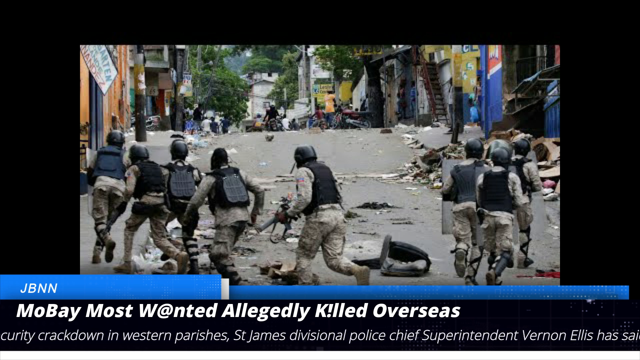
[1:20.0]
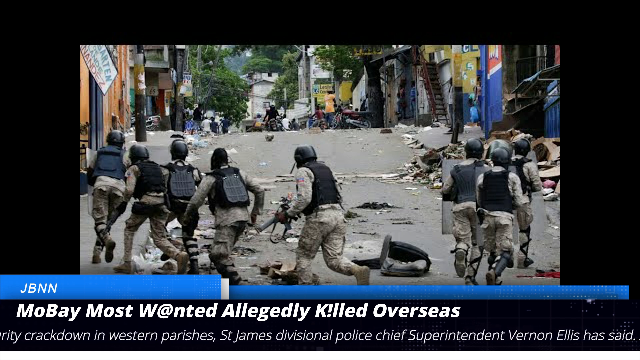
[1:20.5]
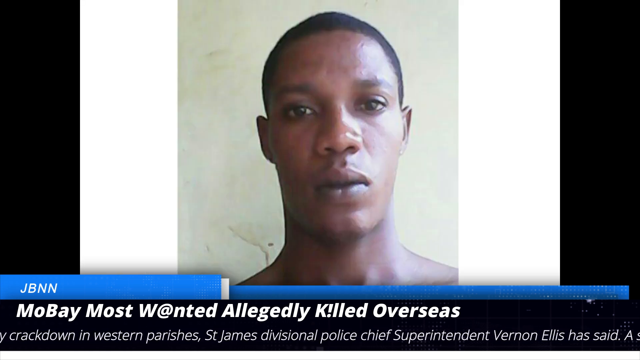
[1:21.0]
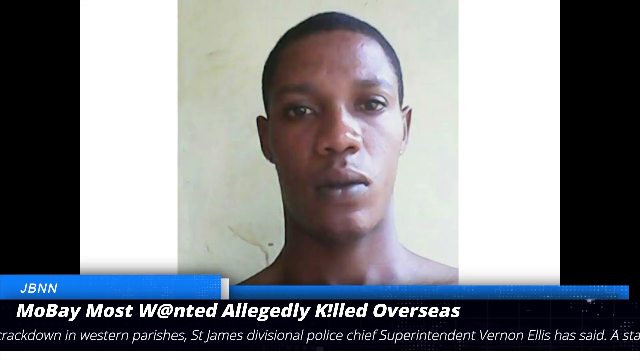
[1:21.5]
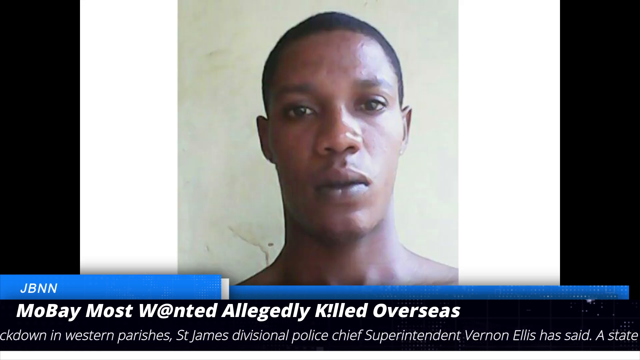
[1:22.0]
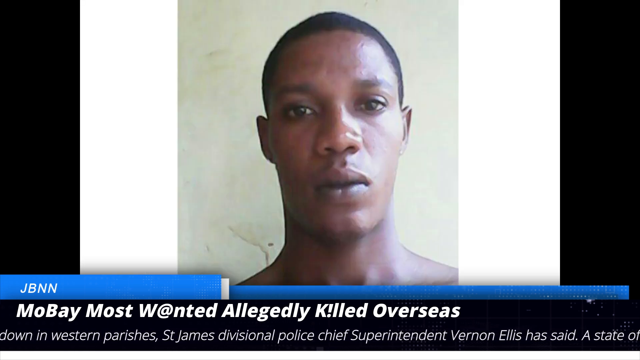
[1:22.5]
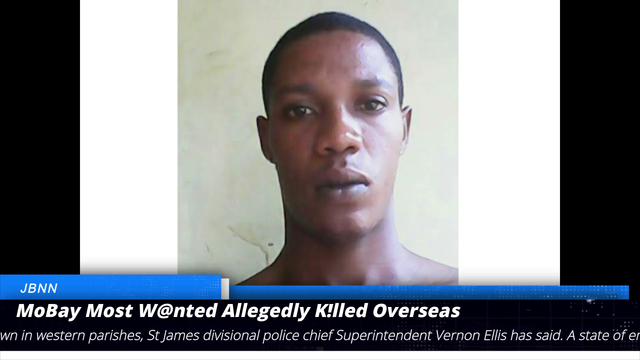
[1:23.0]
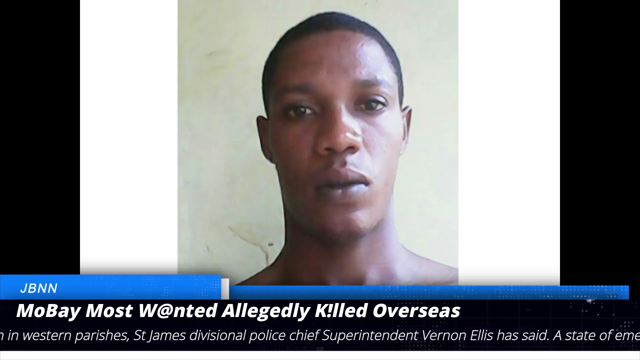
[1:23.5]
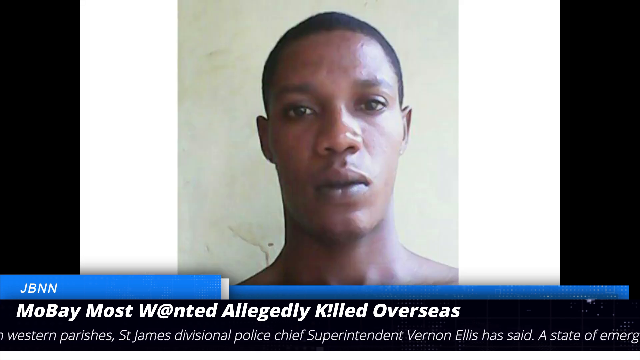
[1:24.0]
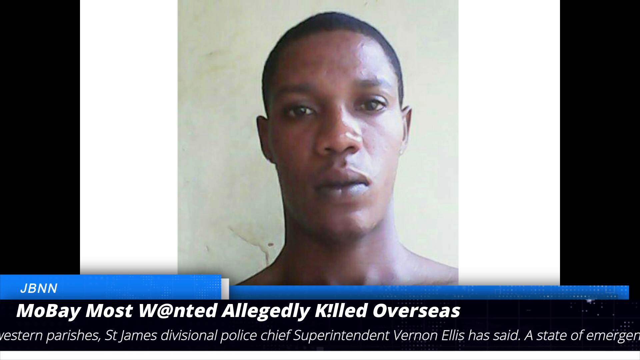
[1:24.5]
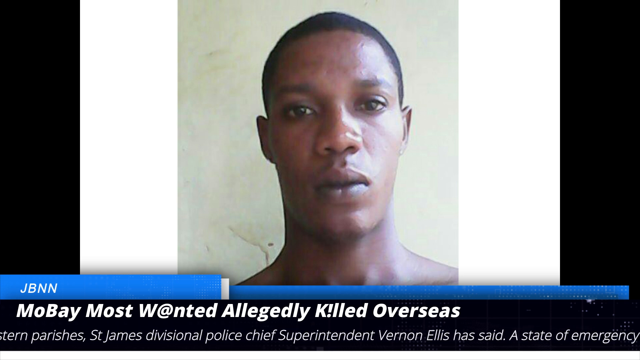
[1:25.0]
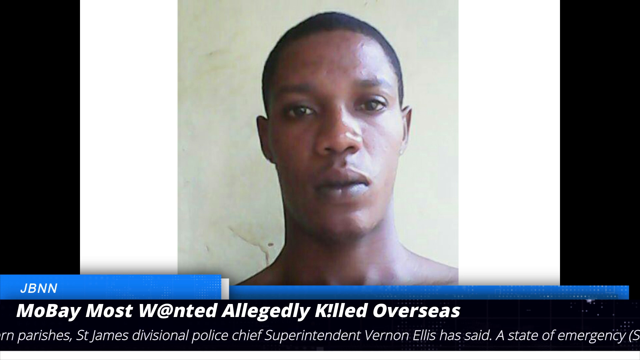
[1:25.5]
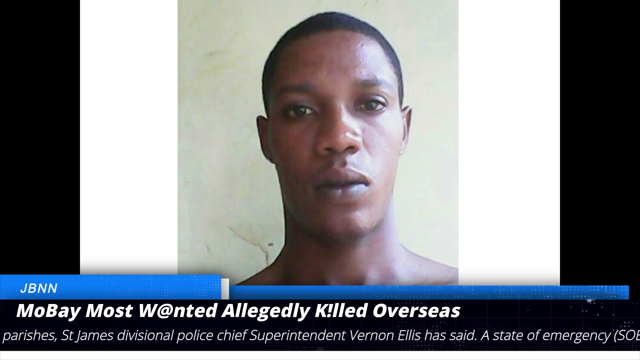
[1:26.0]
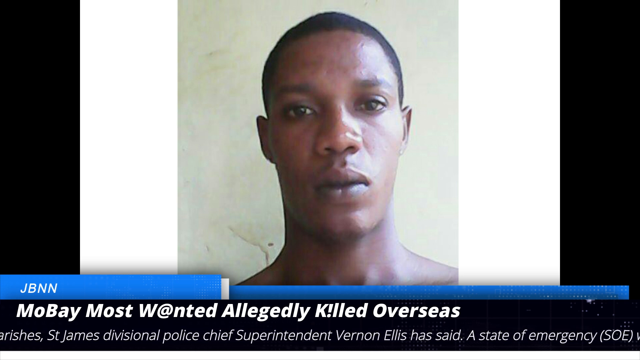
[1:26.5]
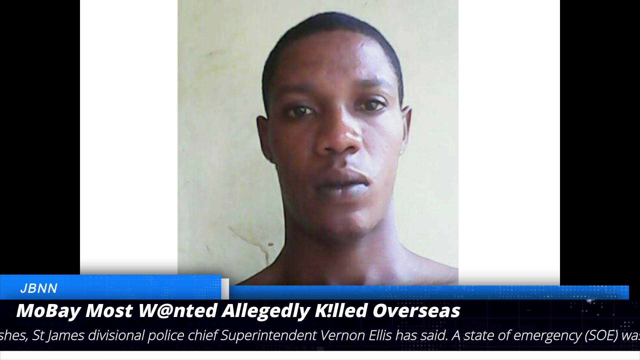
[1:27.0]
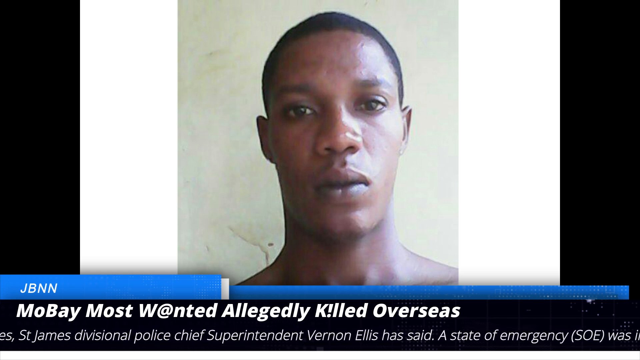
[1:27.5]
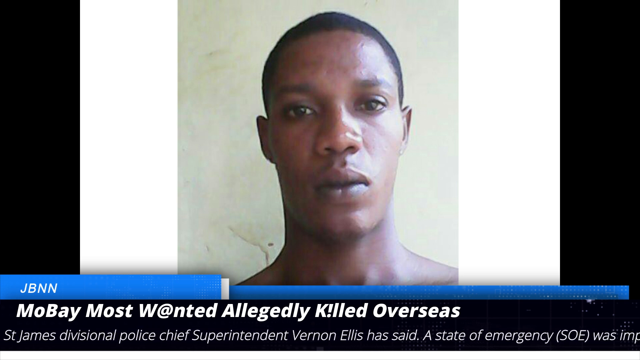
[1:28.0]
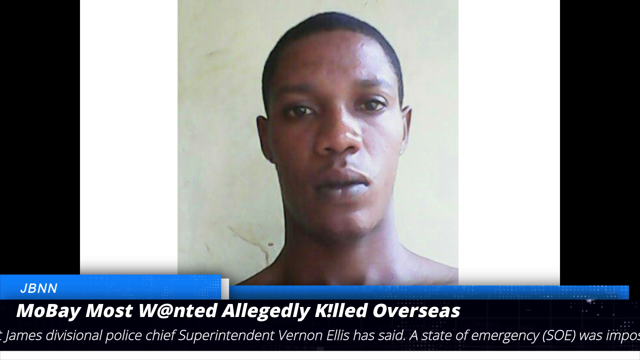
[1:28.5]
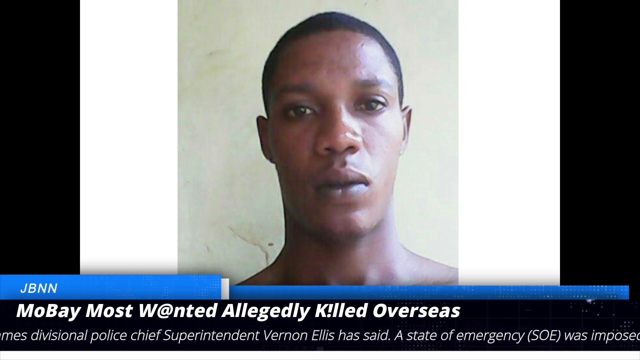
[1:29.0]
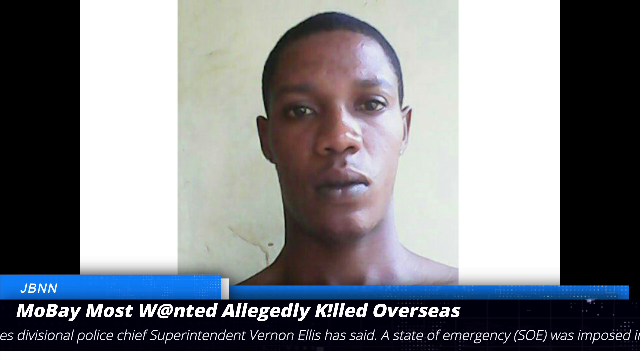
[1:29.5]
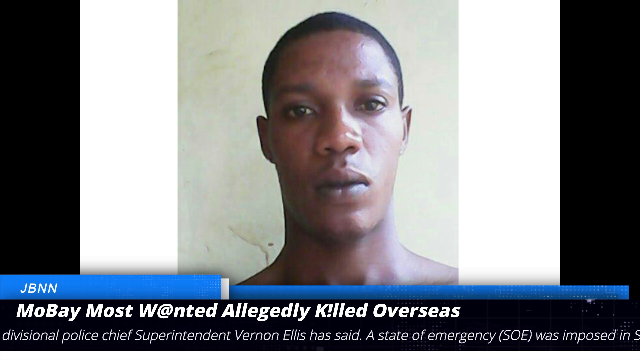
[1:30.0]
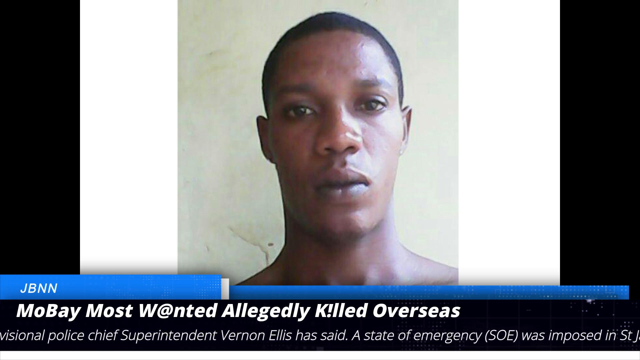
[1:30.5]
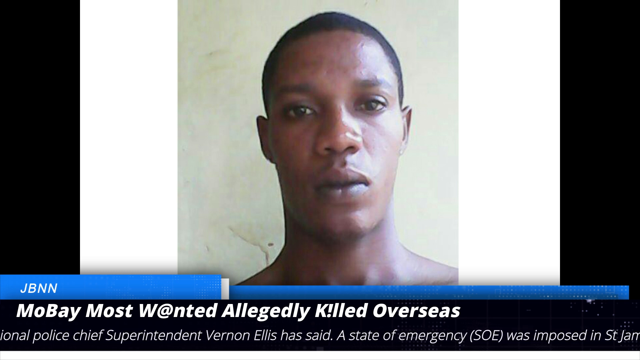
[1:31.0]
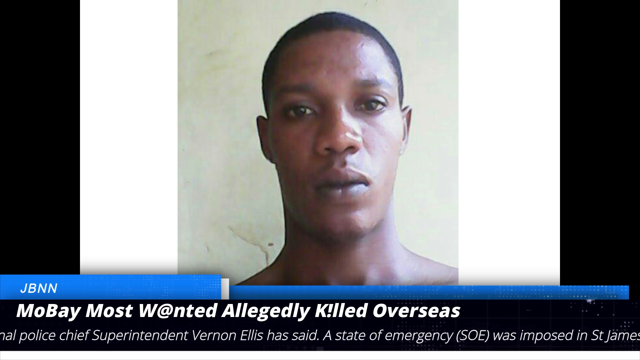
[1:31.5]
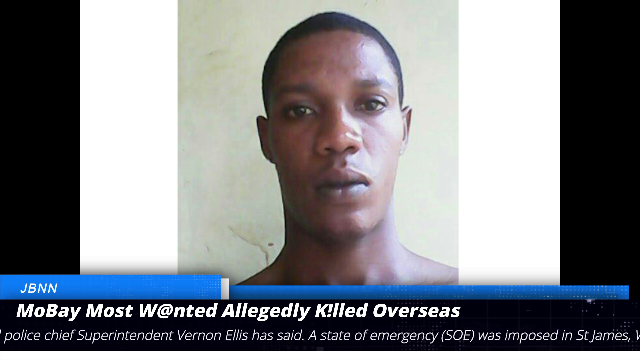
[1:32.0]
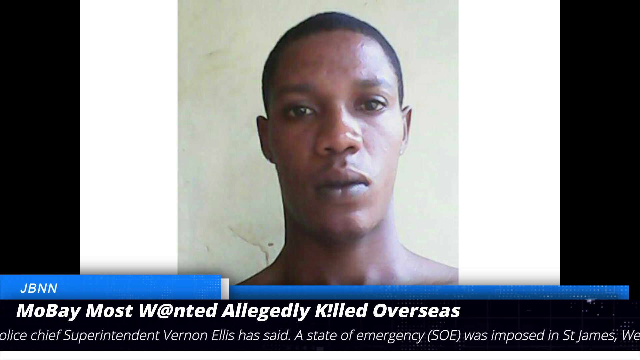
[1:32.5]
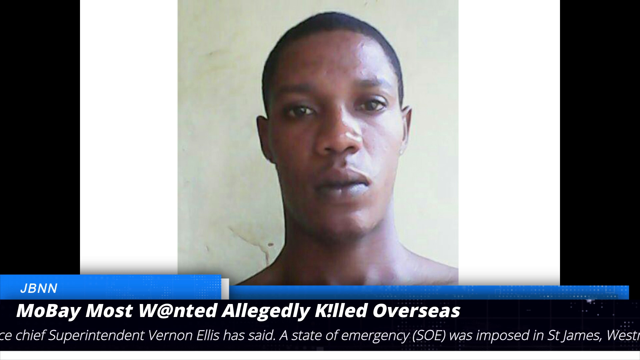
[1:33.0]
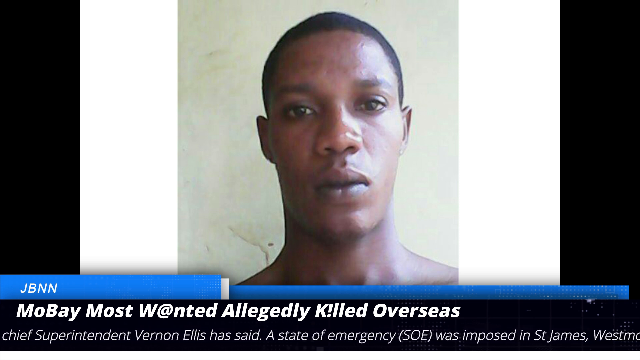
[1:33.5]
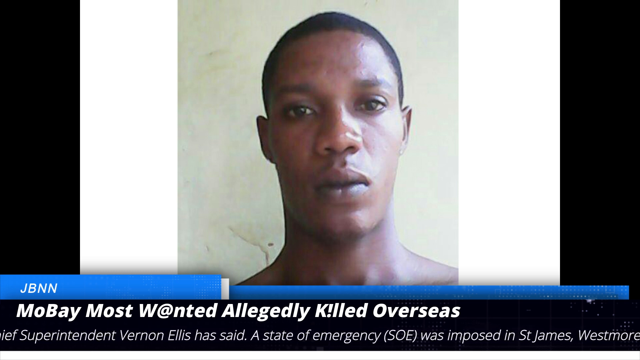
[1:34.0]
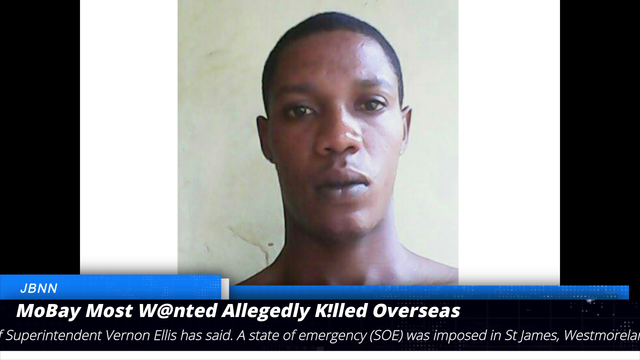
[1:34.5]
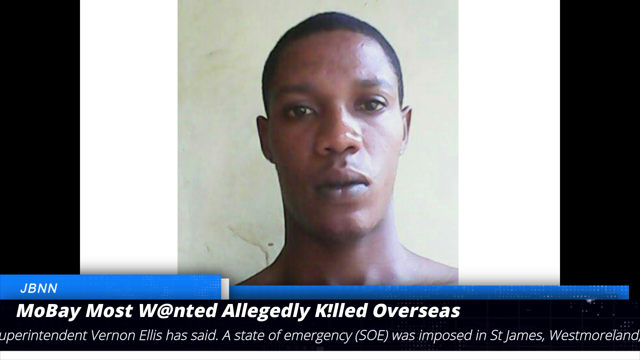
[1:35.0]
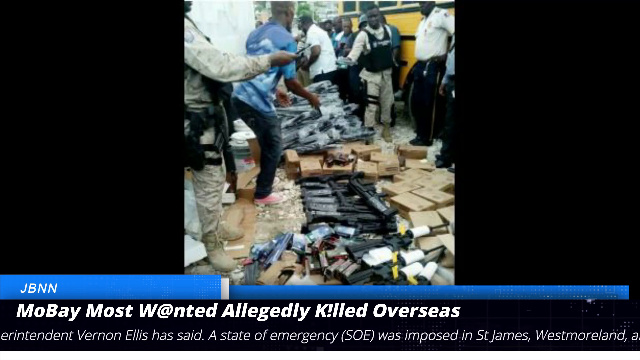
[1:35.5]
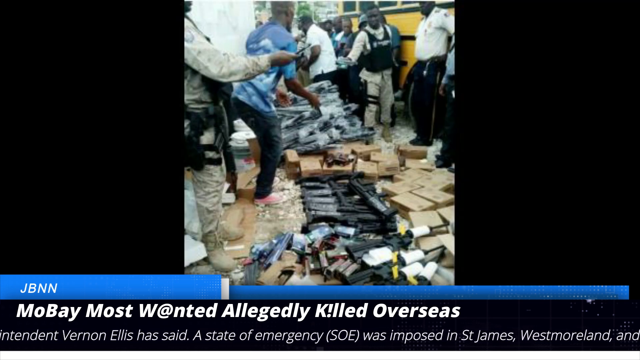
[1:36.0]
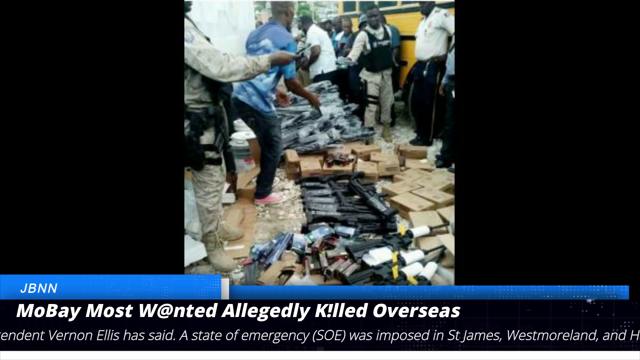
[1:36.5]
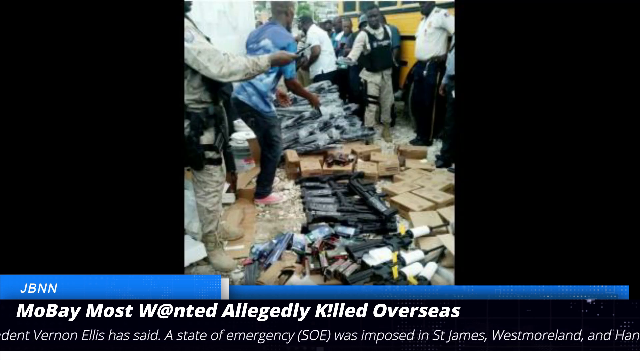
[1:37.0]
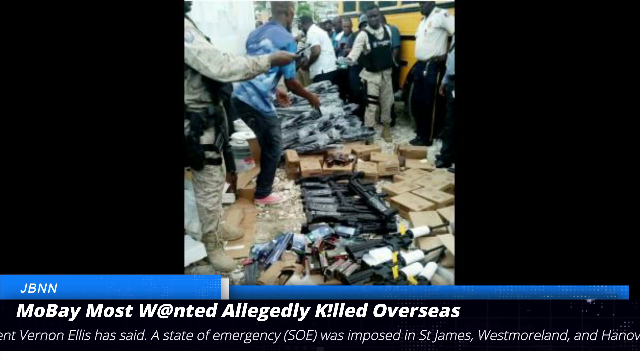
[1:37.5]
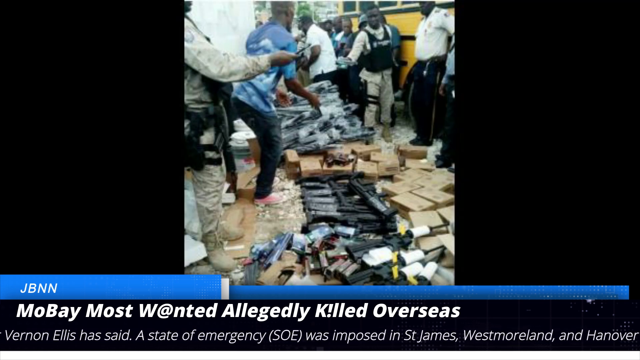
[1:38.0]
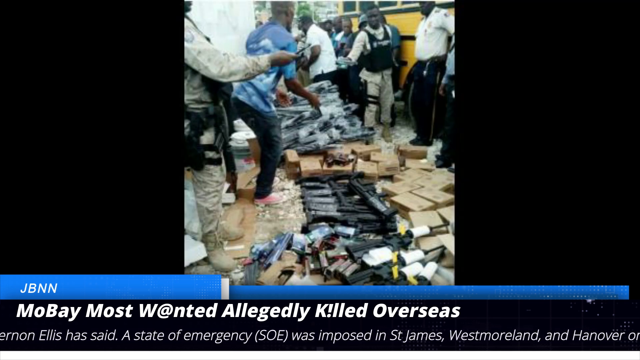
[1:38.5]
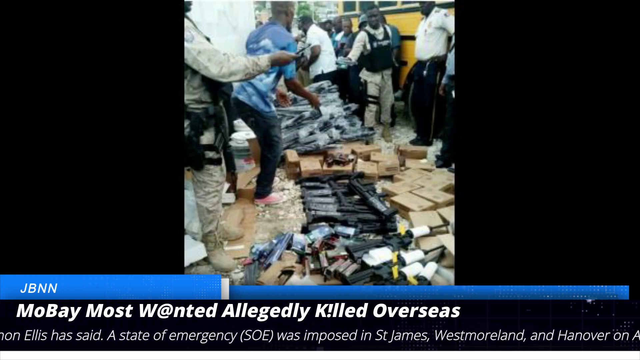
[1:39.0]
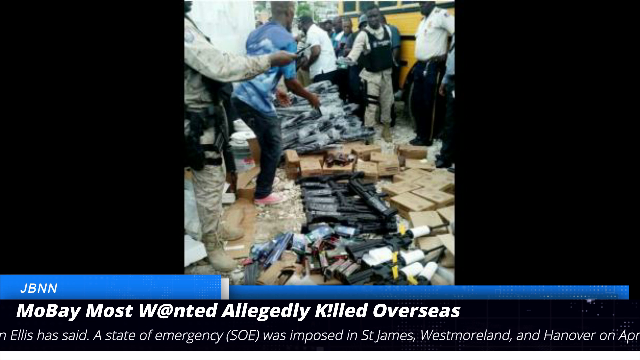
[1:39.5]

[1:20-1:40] Letterboxing surrounds a picture in the center. The static image shows a street littered with debris that looks to be pieces of rubble, trash and so on. A group in military outfits, all in full-body camo with black helmets and black, likely bulletproof vests, is split in two: a group of three moves to the upper right, facing away from the camera, and a group of five moves from the center toward the center of the left-hand side. The man at the back has some sort of assault rifle. Text at the bottom reads "wanted allegedly killed overseas". It then transitions to another static image, a headshot of a black man with buzz-cut hair and a neutral expression, looking straight at the camera. He is probably in his 20s, judging by his age signs. The background behind him is kind of a brownish green.